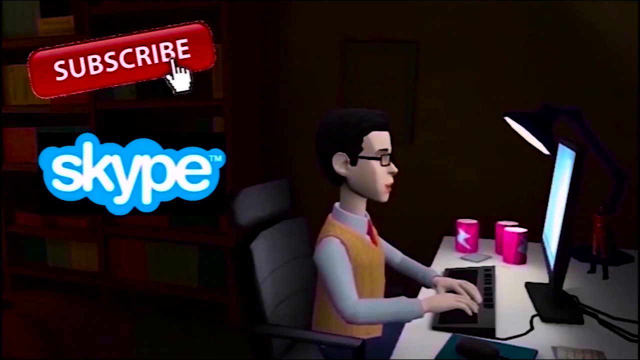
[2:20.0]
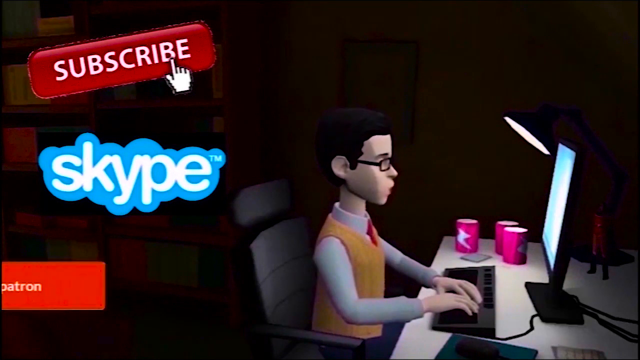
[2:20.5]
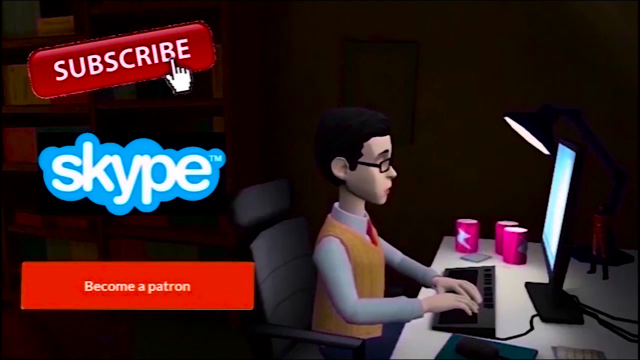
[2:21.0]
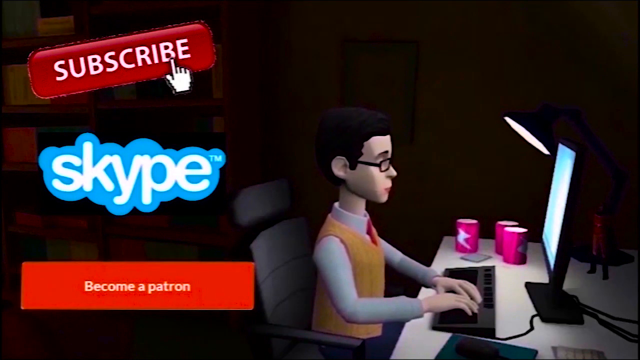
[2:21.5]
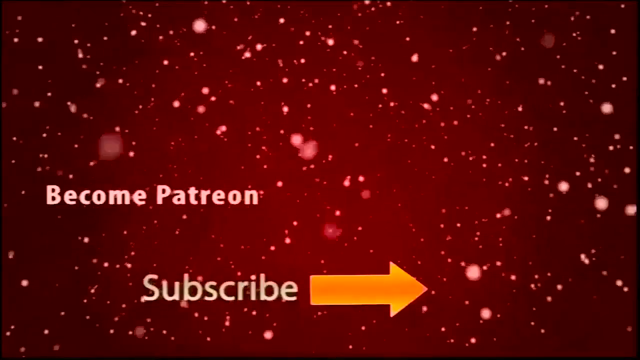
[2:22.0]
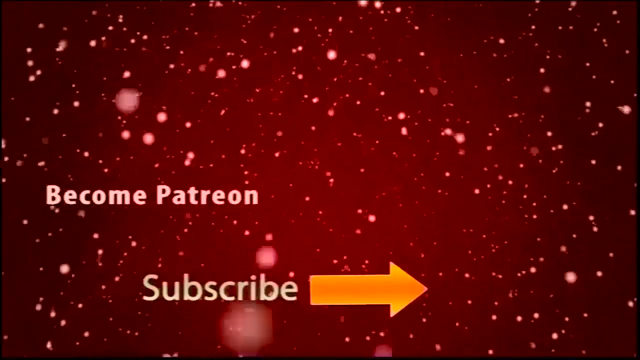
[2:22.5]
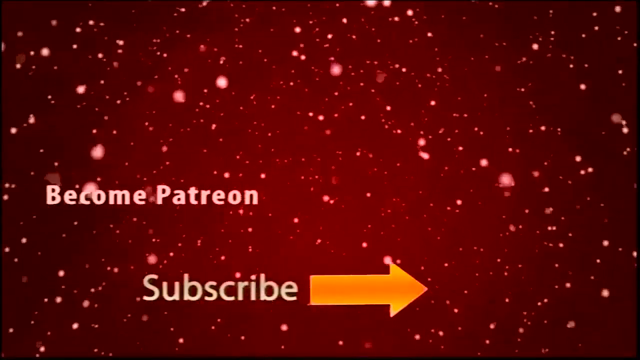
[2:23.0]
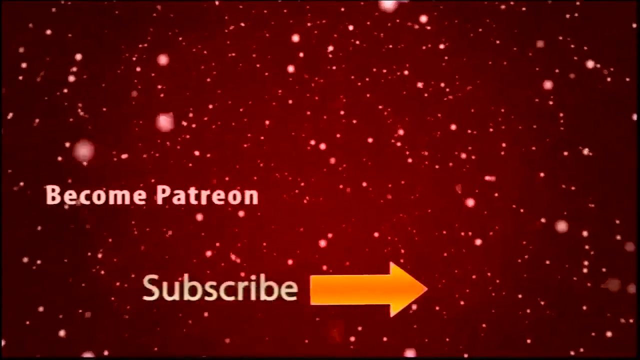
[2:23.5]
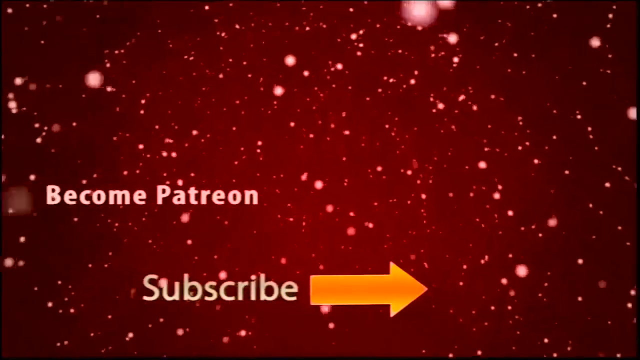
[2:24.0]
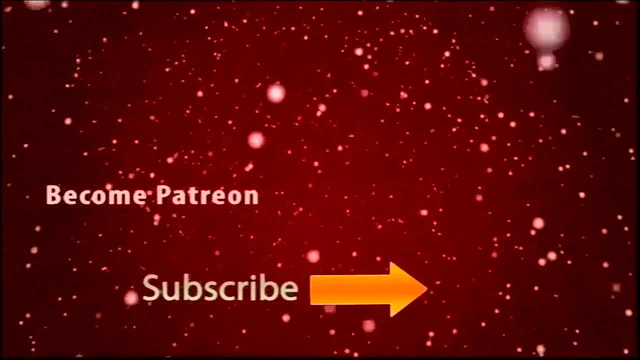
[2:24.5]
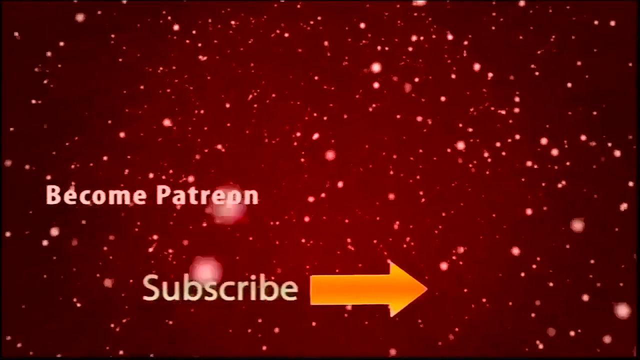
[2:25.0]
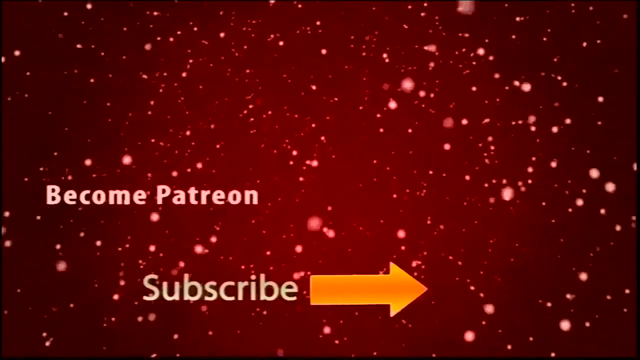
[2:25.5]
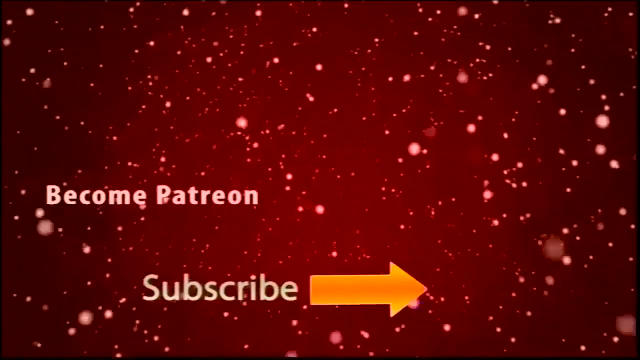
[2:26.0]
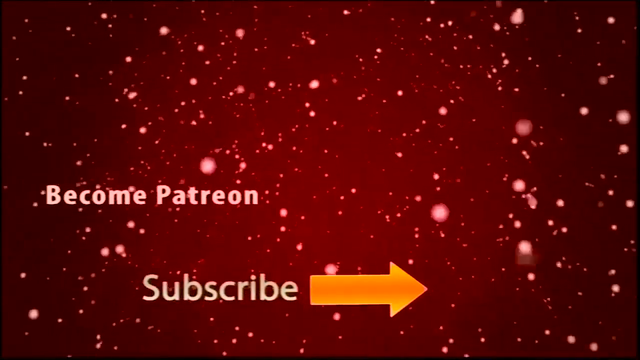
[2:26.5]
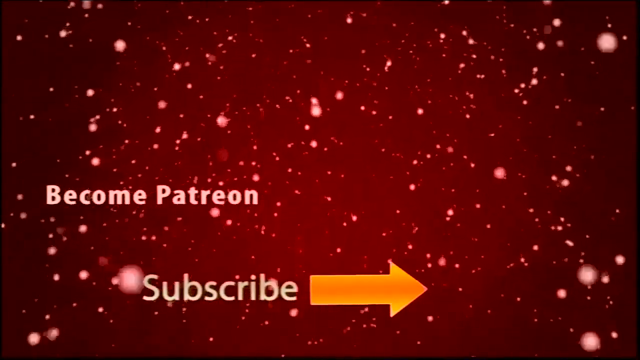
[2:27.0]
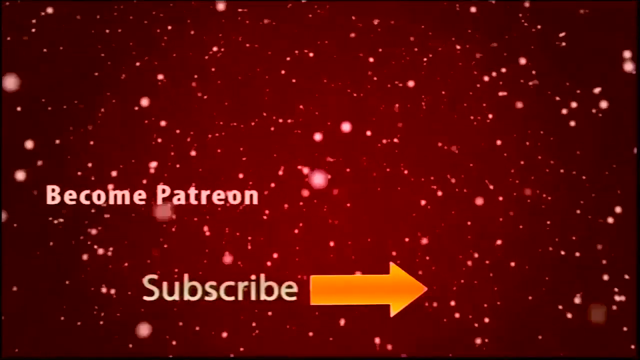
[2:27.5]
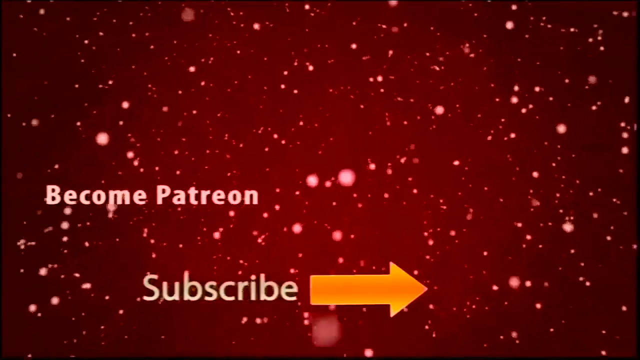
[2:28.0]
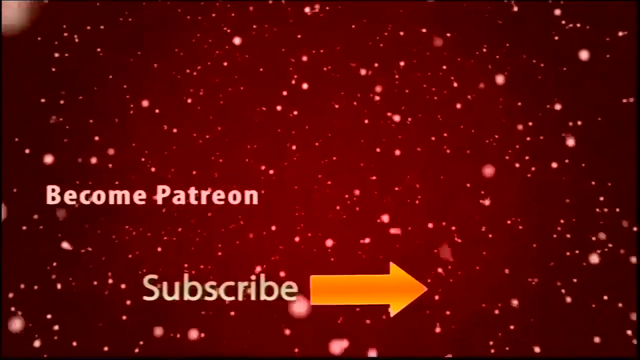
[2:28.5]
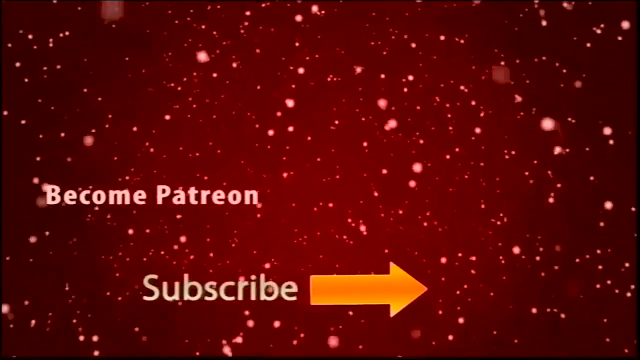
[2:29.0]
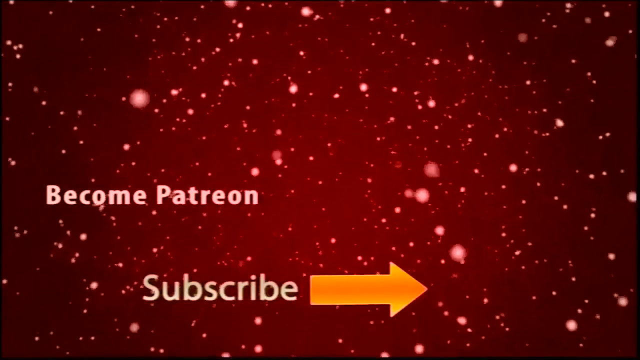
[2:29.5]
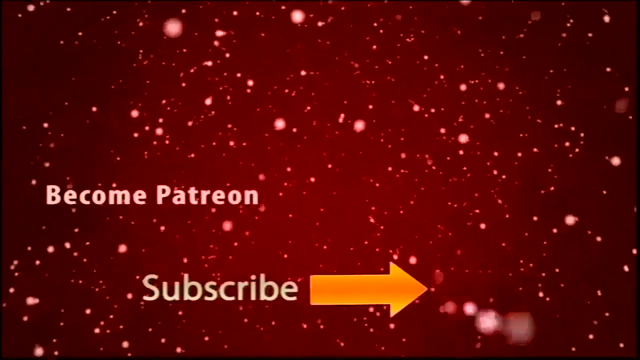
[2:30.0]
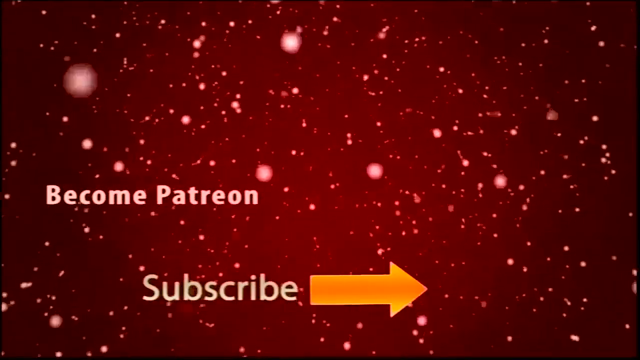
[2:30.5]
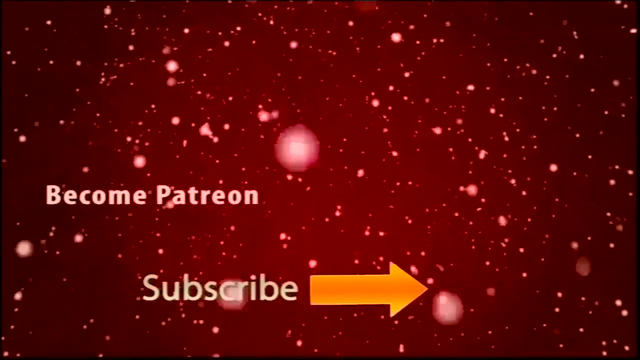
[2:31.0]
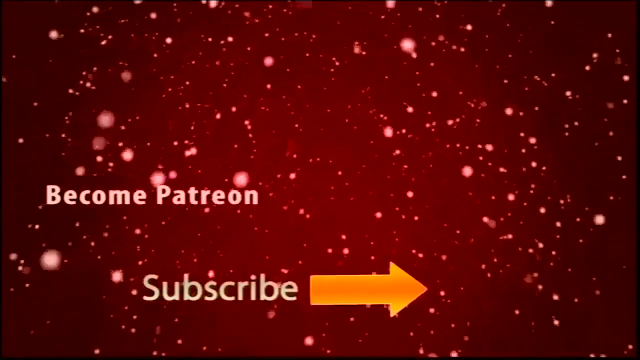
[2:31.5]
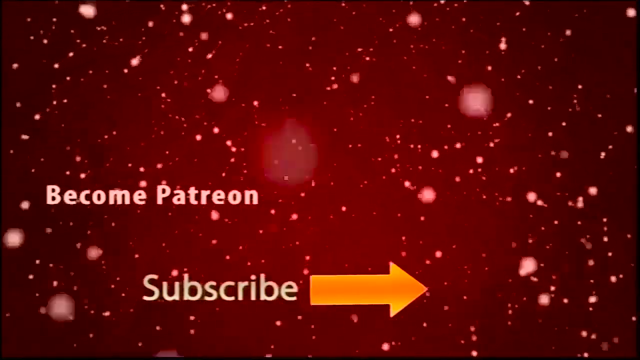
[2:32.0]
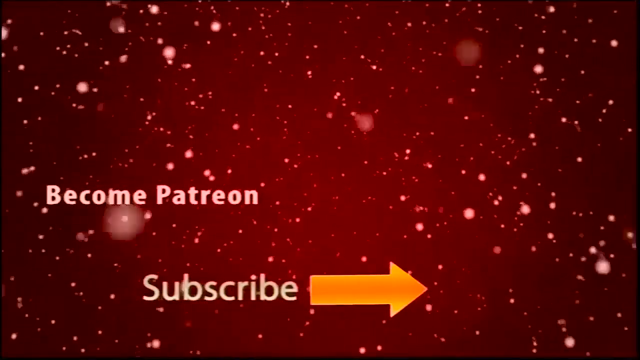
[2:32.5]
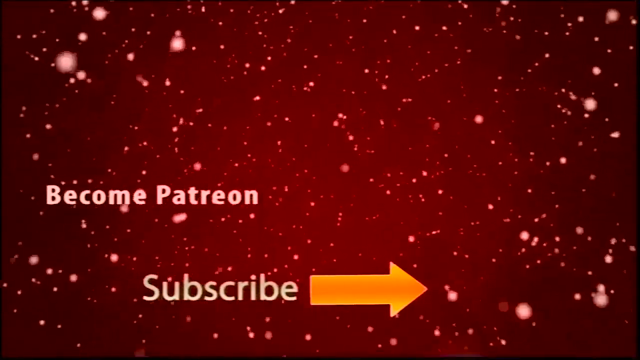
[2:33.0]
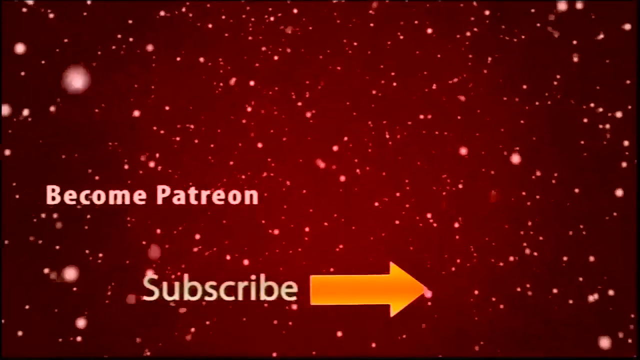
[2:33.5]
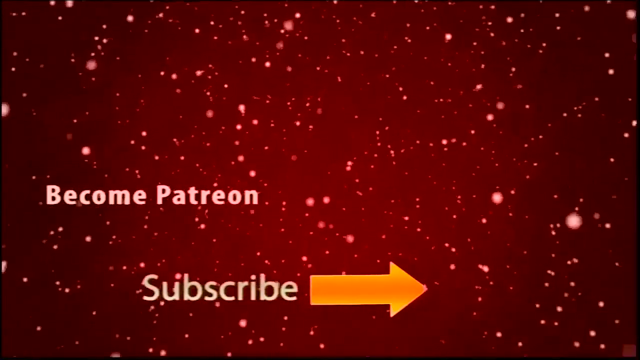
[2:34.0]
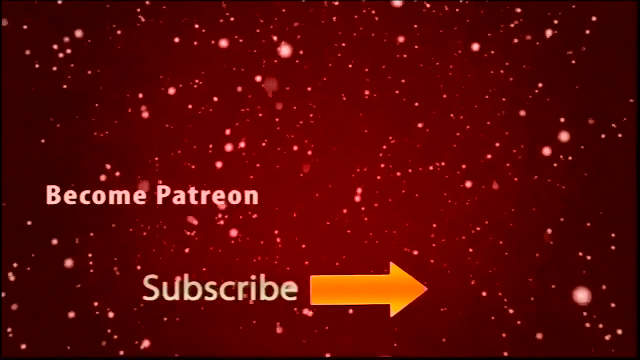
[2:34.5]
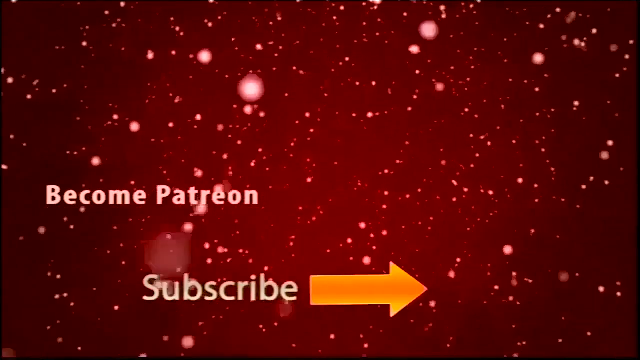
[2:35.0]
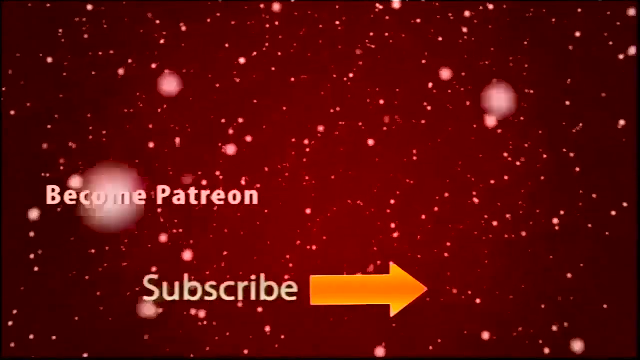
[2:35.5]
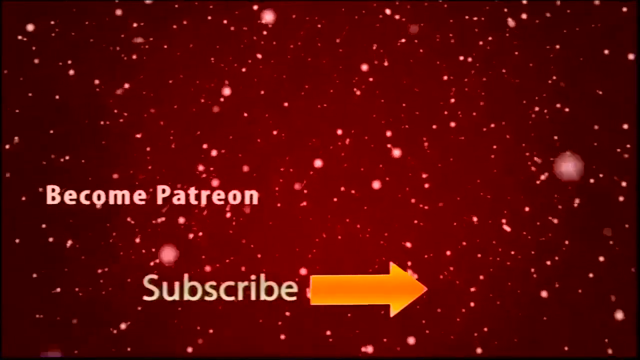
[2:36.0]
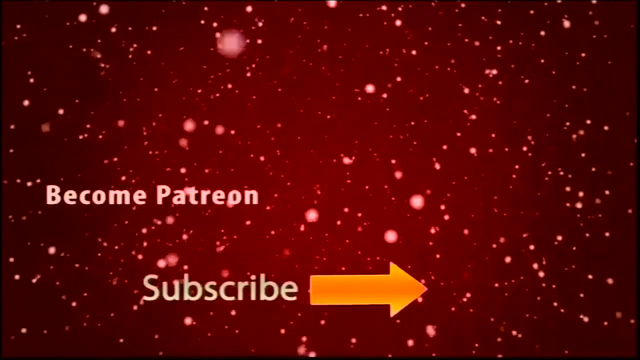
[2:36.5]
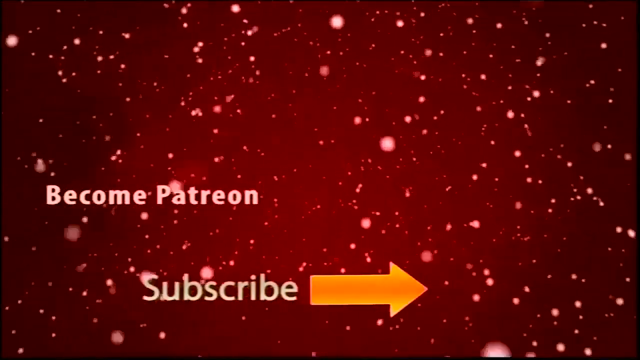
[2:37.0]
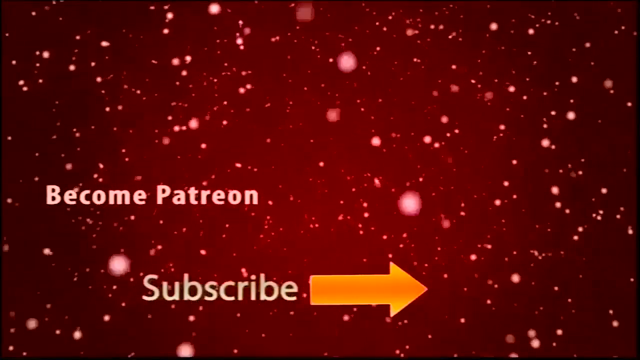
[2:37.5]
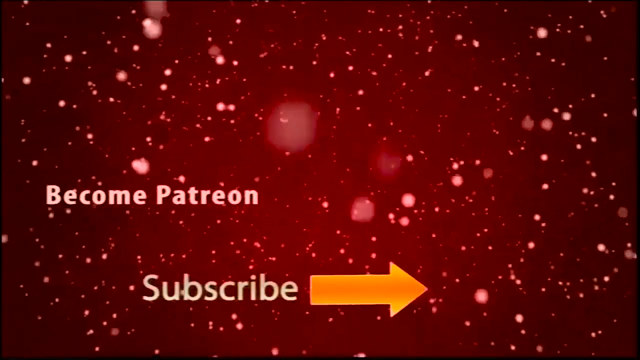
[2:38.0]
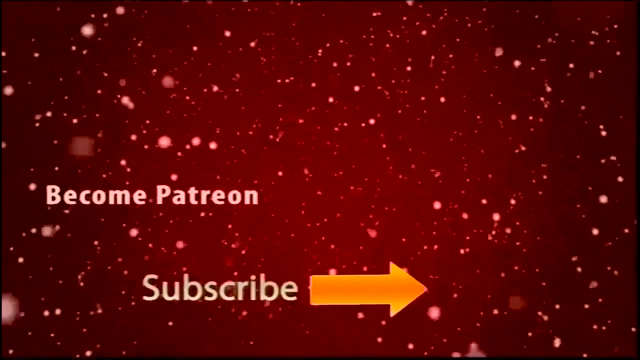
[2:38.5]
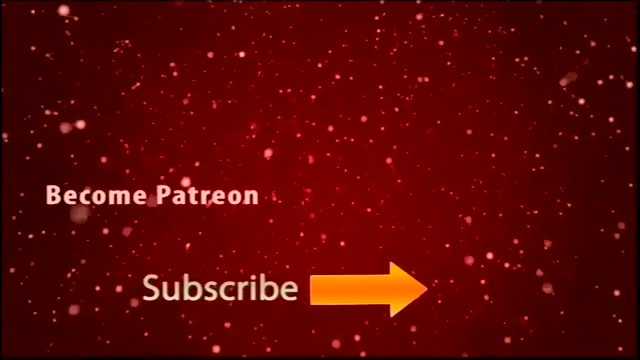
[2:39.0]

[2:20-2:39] A man in some kind of work clothes, a yellow sweater, a shirt and a red tie, with glasses and dark hair, is in front of a computer and seems to be doing some kind of programming. He asks the viewer to subscribe to the channel or become a patron. The image changes to a red background with many small white dots falling like snow, and text reading "become patron or subscribe", with an orange arrow coming from the word "subscribe" and pointing at nothing. The white dots keep falling like snow over and over. The man seems to be the animator who made the video about the red cell count.